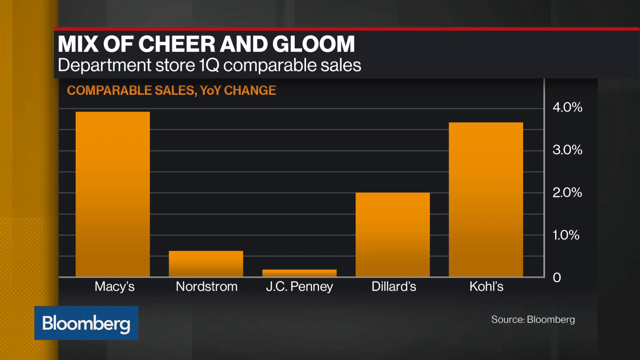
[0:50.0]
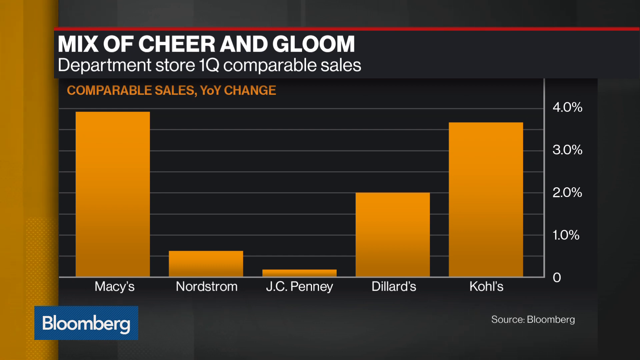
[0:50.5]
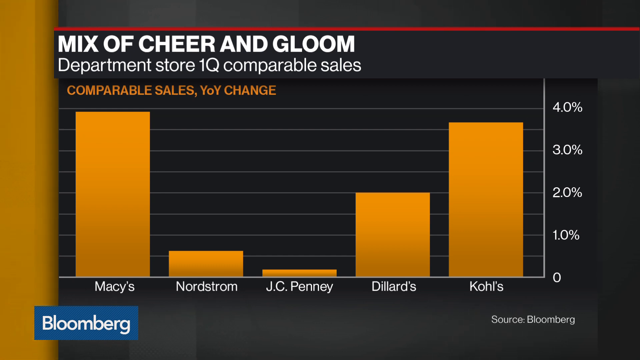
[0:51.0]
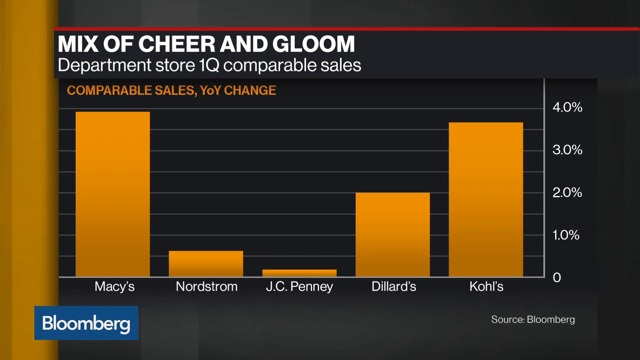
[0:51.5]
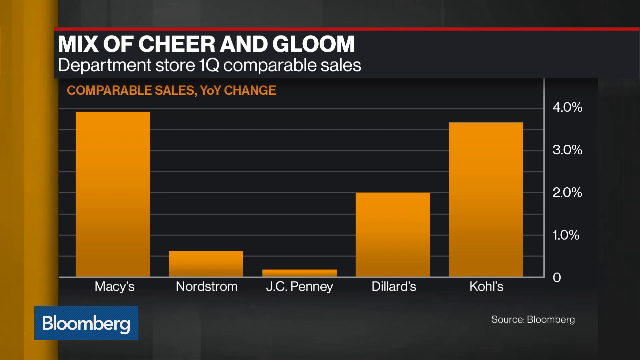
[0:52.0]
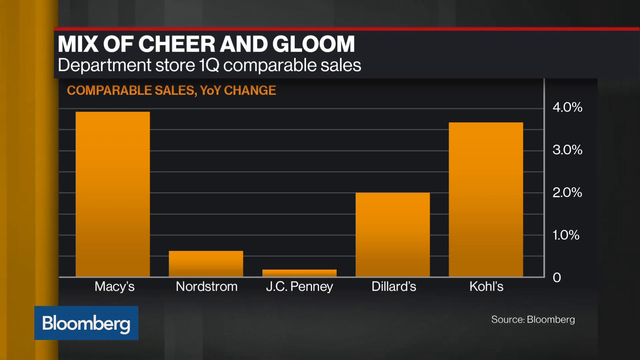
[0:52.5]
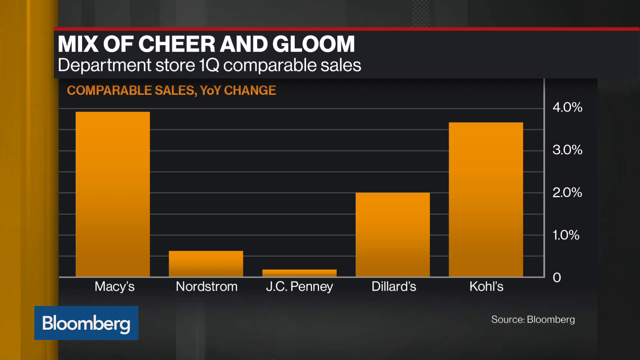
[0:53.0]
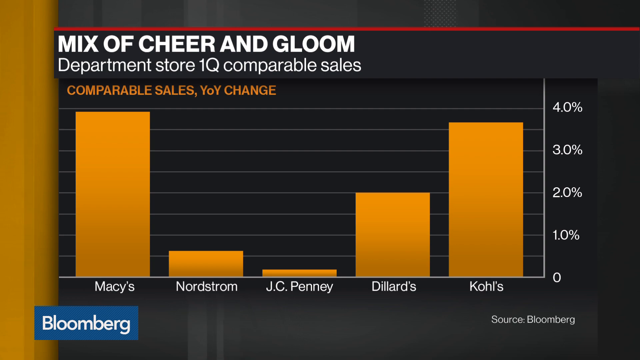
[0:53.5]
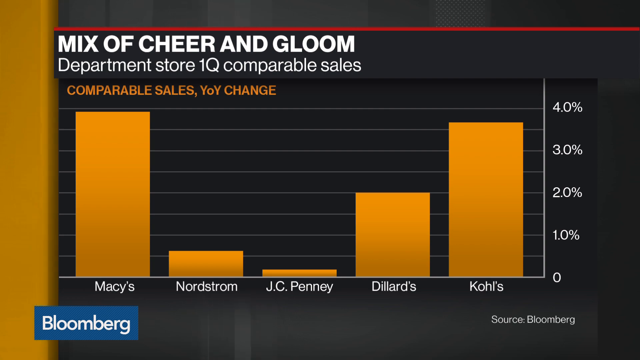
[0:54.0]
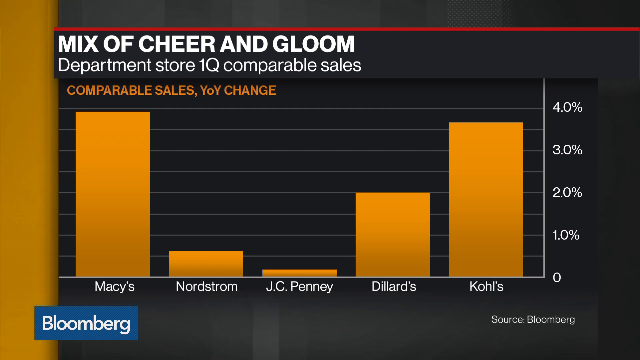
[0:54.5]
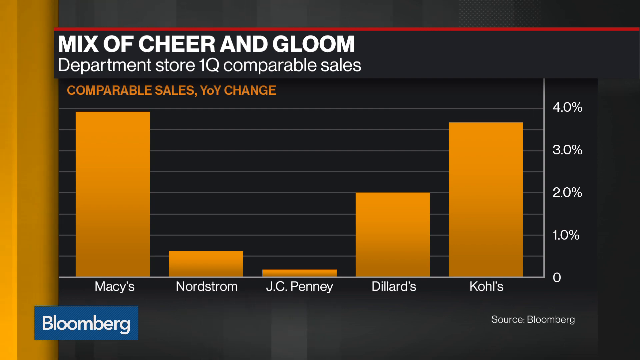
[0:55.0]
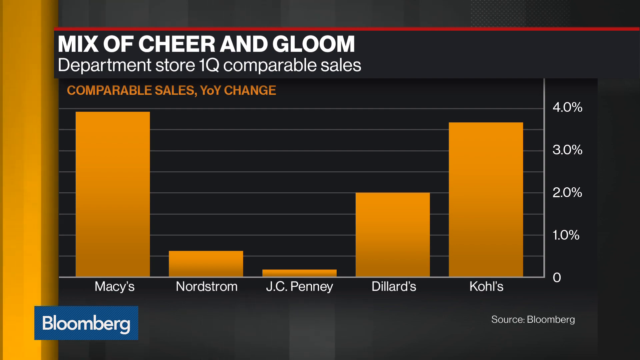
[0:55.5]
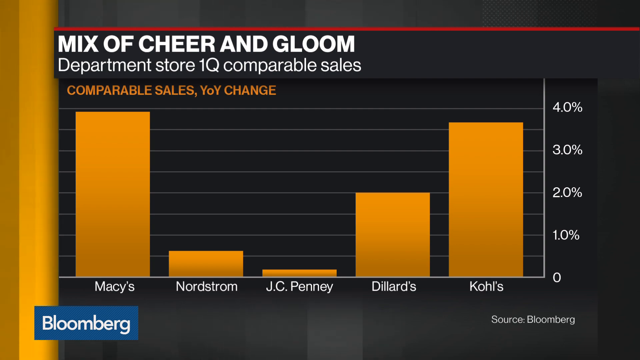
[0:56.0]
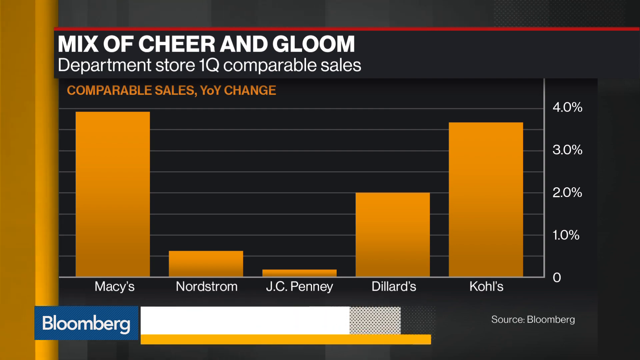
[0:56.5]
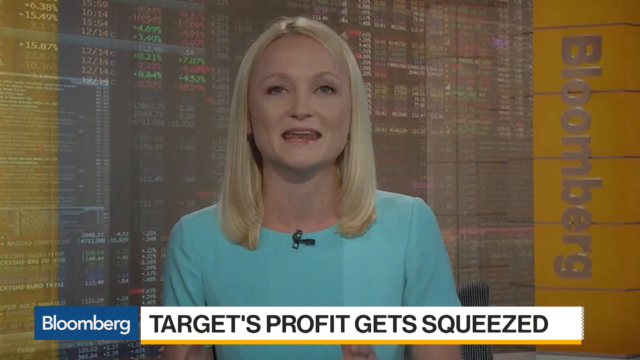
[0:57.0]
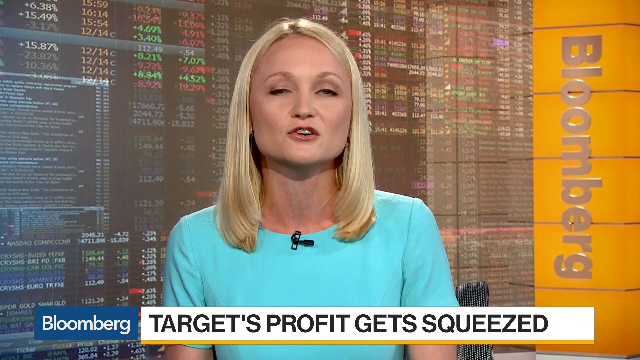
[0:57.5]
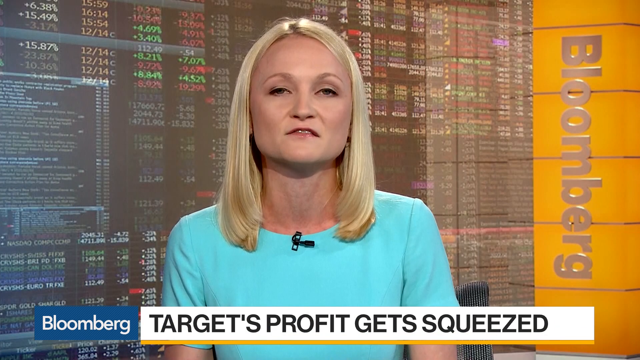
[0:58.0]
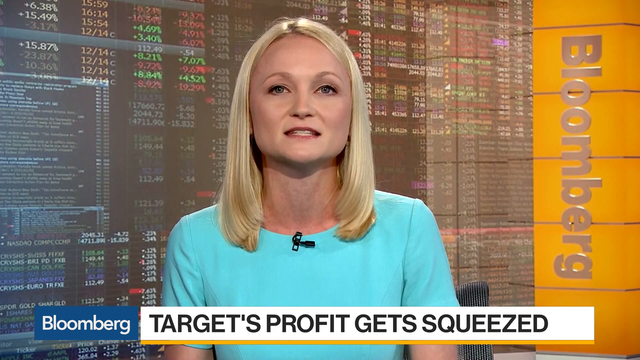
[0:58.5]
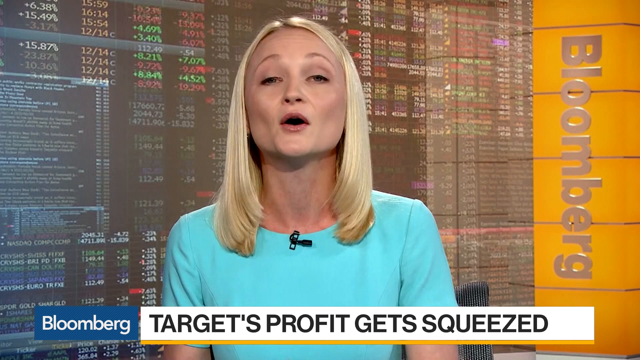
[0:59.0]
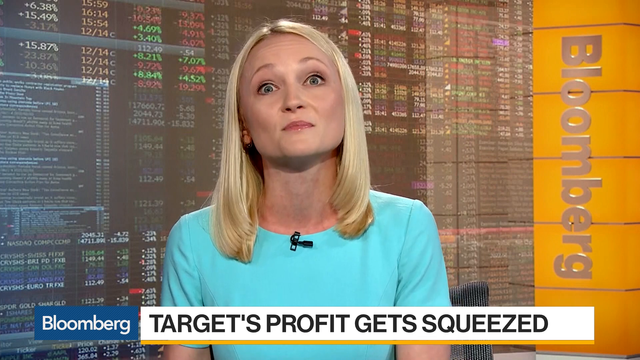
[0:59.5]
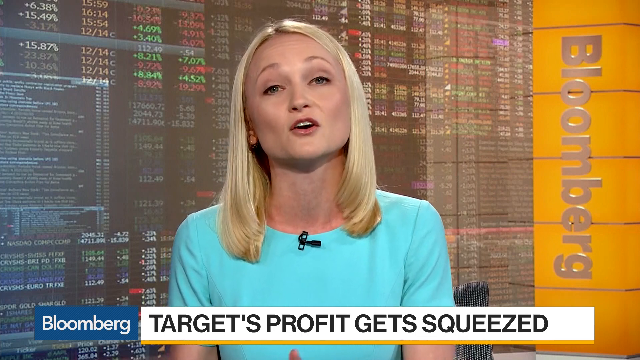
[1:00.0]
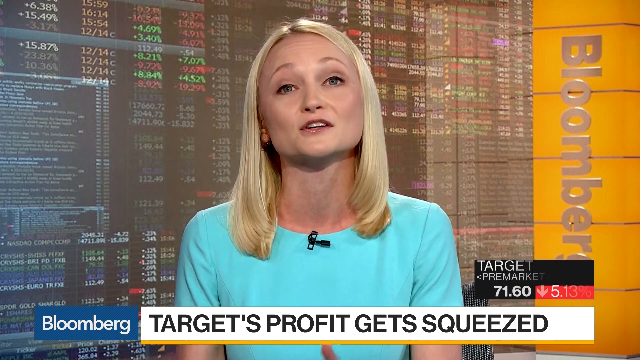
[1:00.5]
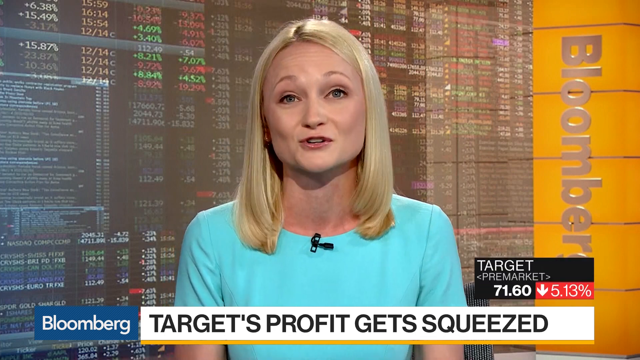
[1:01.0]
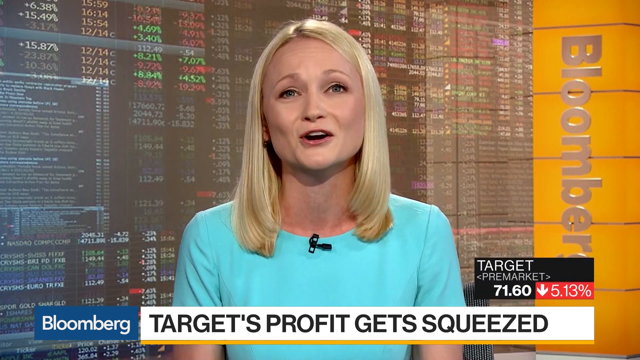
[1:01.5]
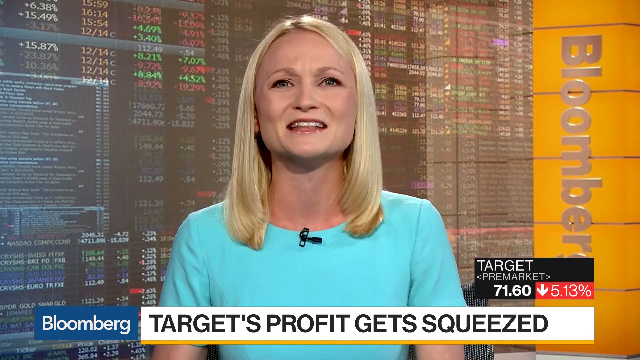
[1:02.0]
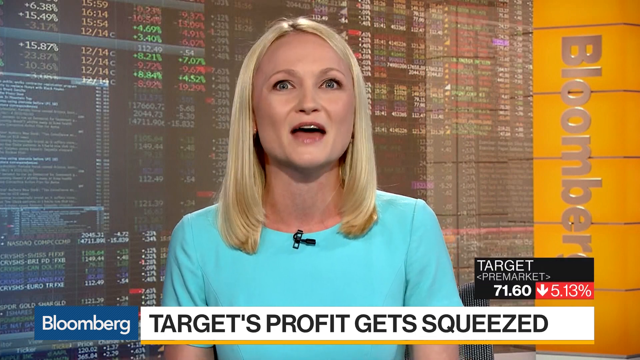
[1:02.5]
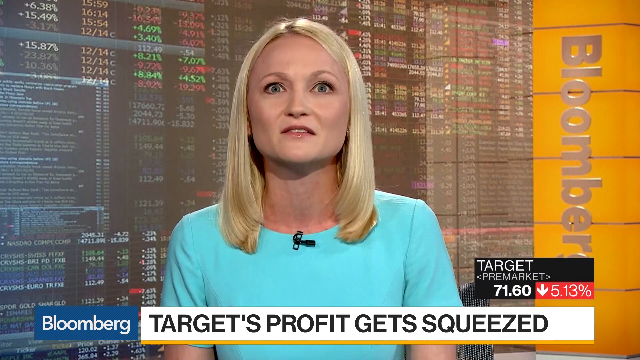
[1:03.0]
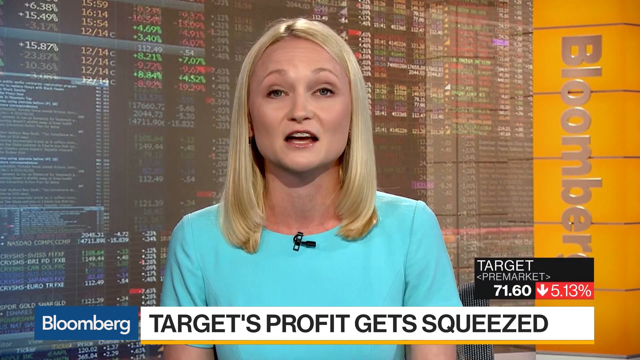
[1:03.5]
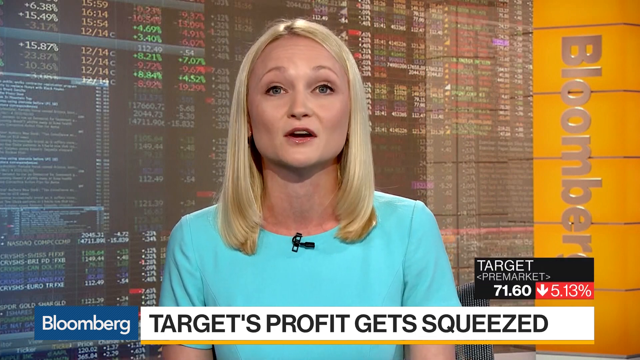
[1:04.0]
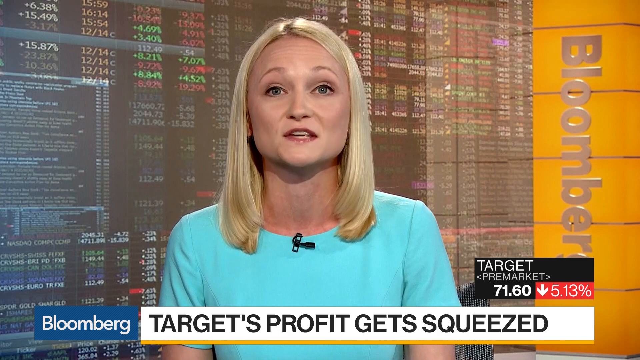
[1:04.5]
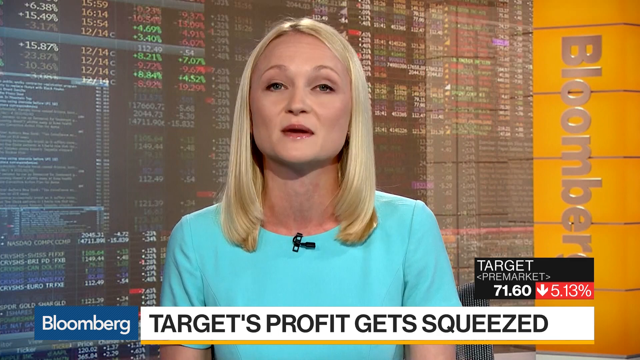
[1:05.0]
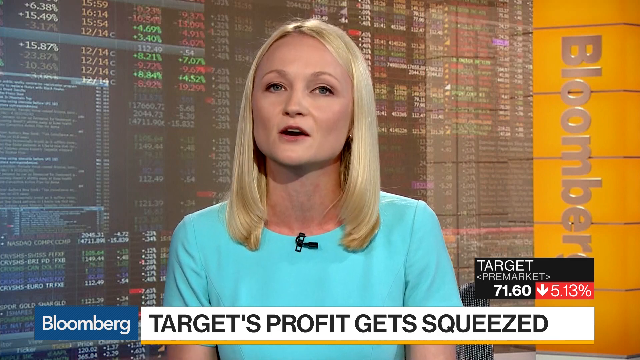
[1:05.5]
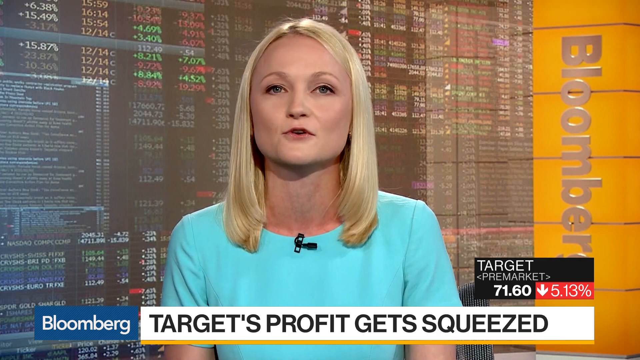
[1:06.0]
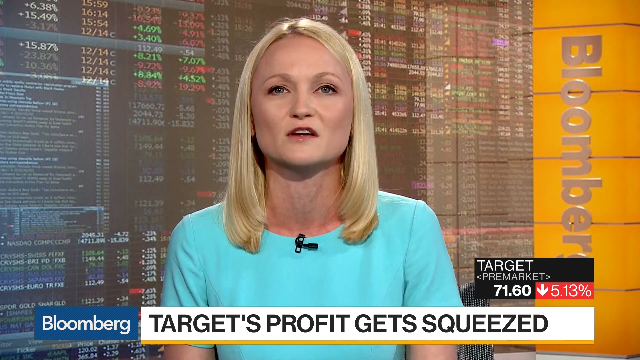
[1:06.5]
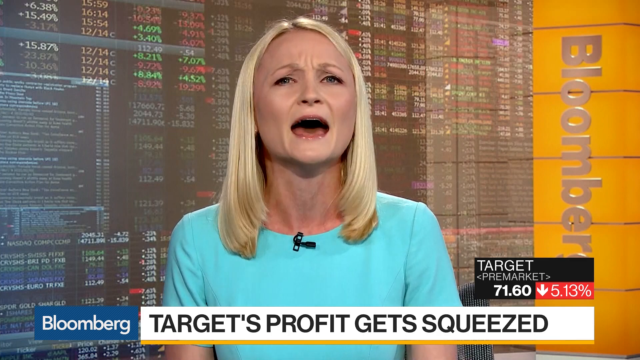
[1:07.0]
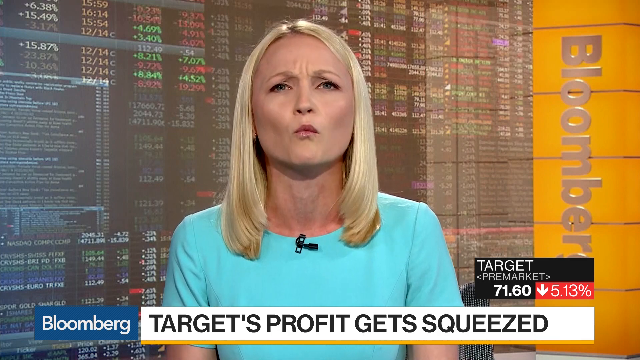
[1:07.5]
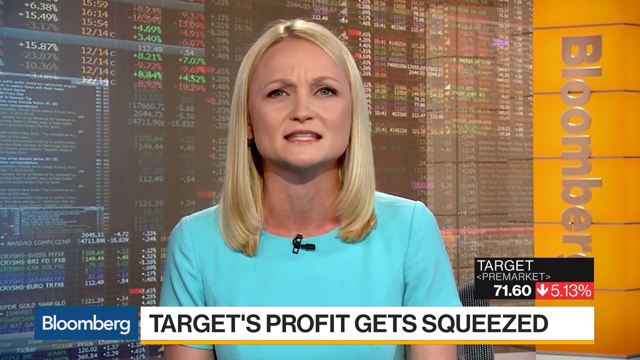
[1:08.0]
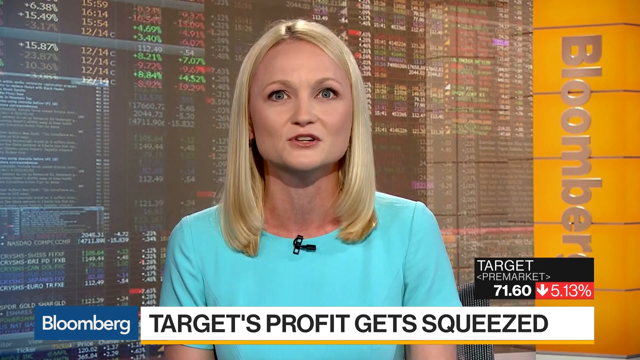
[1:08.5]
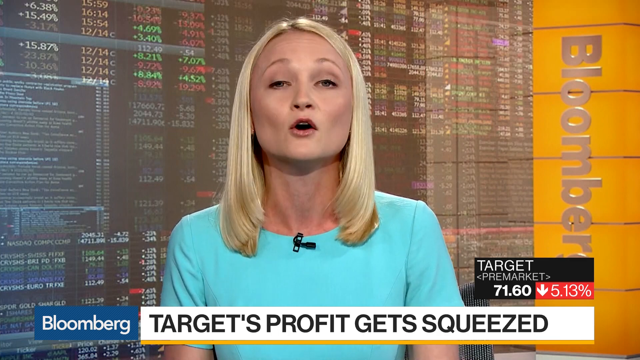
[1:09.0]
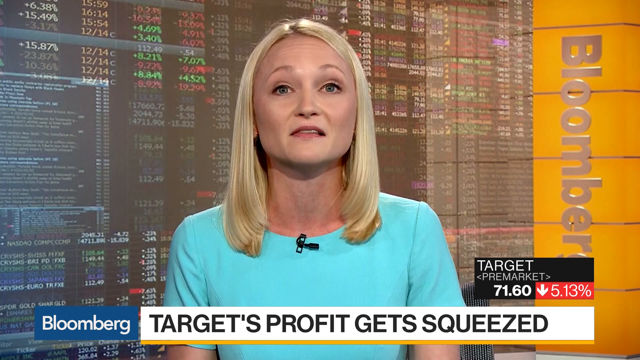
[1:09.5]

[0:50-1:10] The bar graph remains on screen, with a black background and bright orange bars, ranking the department stores' comparable sales for the last month: Macy's at the top, followed by Kohl's, Dillard's and Nordstrom, with JC Penny at the bottom. The screen then returns to the blonde woman in the light blue dress, a black microphone attached to the front of her dress. She speaks directly to the camera while sitting in front of a screen of stock markets and percentages. The Bloomberg logo is on an orange pole beside her, and the text at the bottom of the screen reads "Target's profits get squeezed." As she continues speaking, a box appears in the bottom right-hand corner showing that Target went down 5.13 percent.